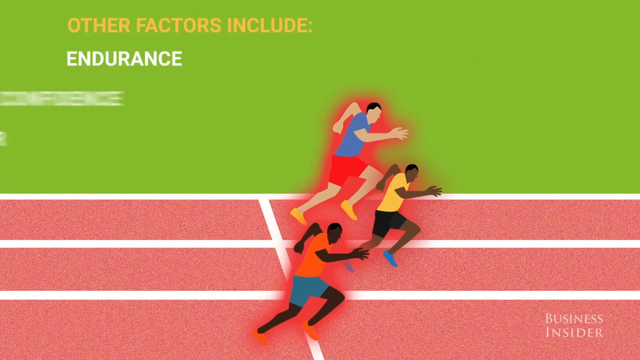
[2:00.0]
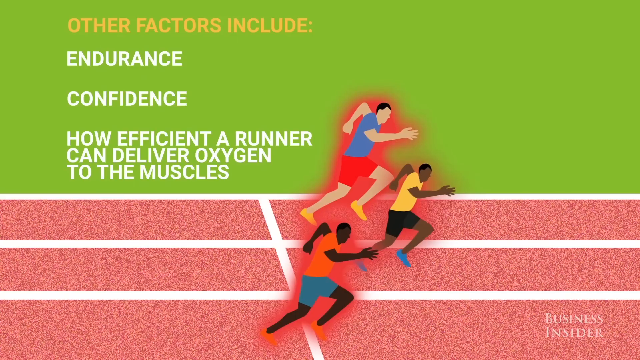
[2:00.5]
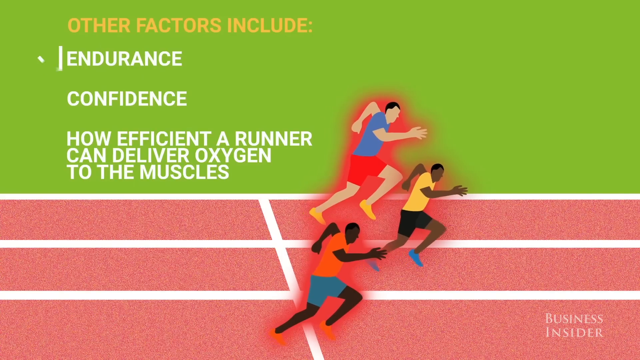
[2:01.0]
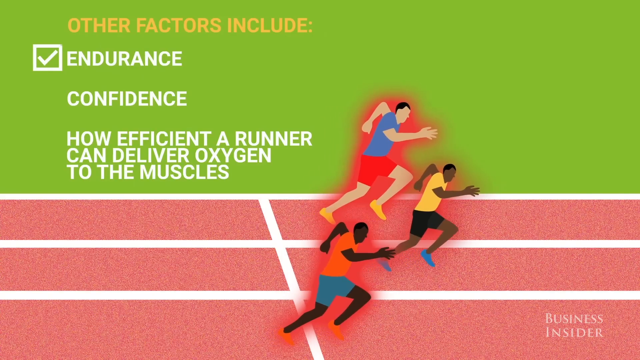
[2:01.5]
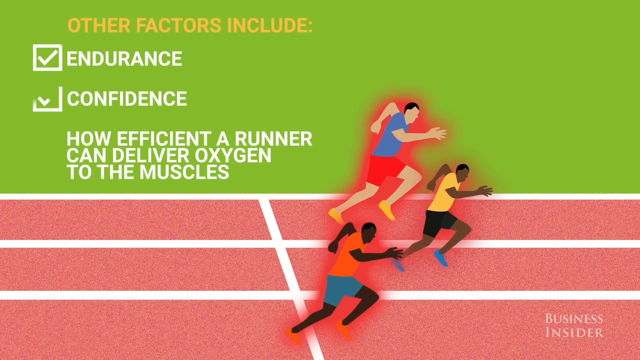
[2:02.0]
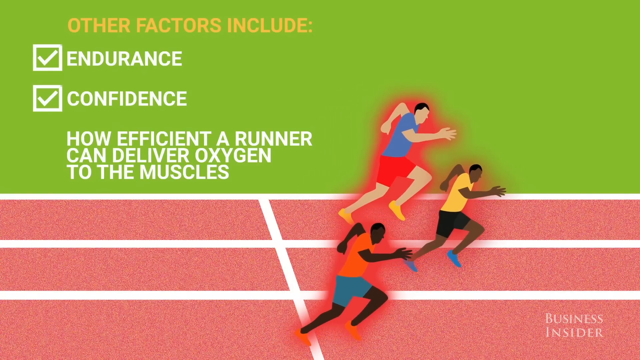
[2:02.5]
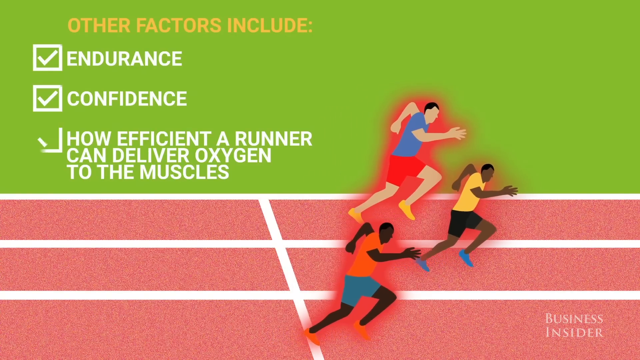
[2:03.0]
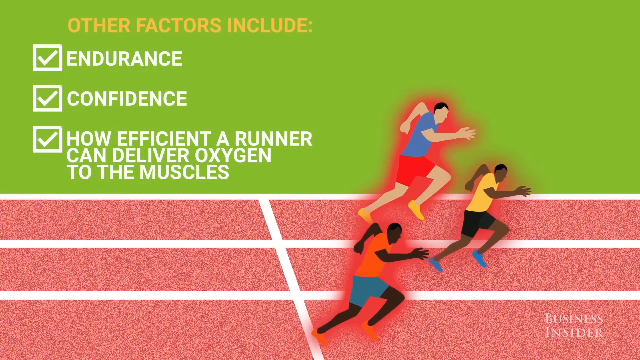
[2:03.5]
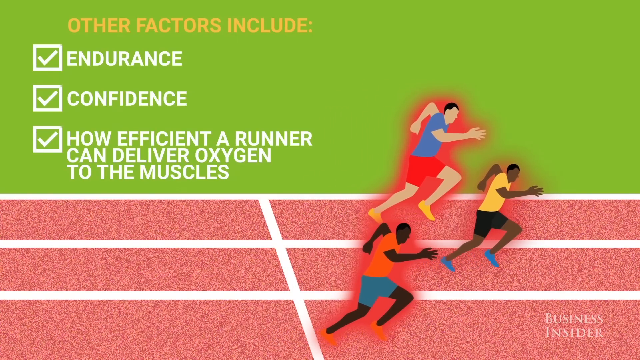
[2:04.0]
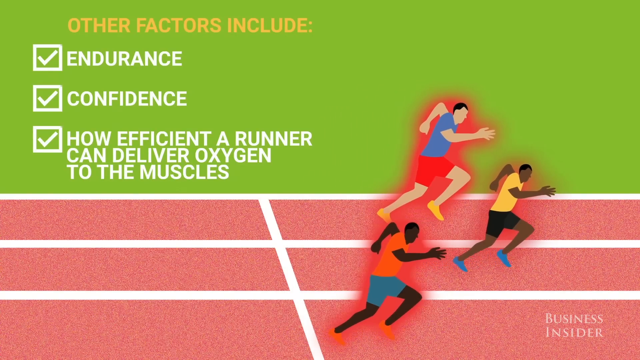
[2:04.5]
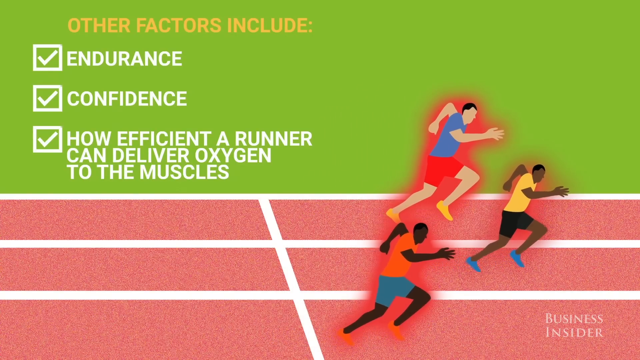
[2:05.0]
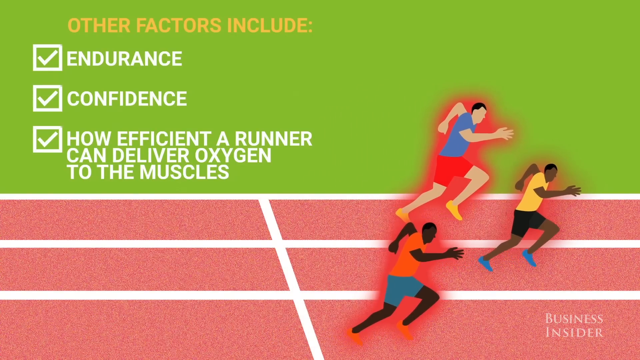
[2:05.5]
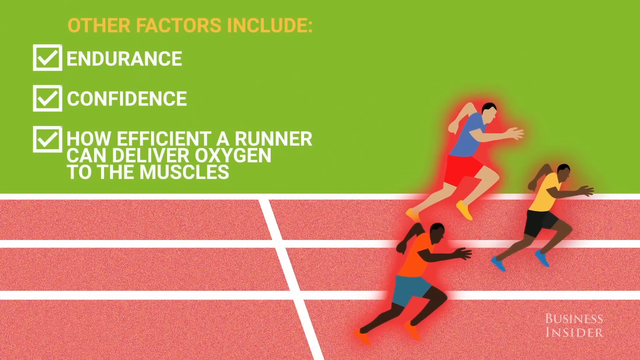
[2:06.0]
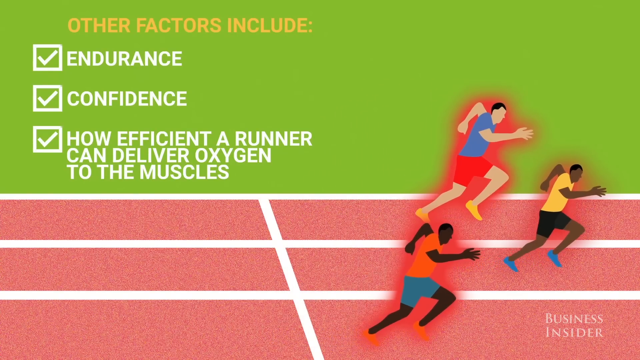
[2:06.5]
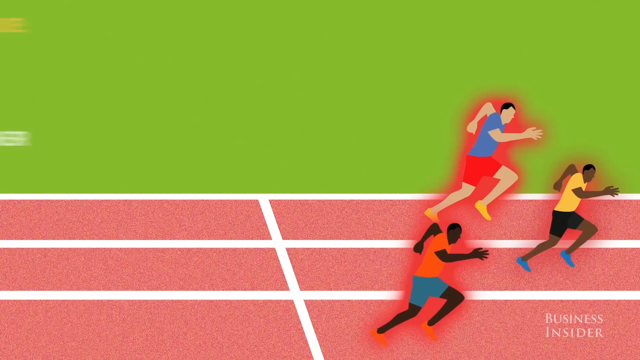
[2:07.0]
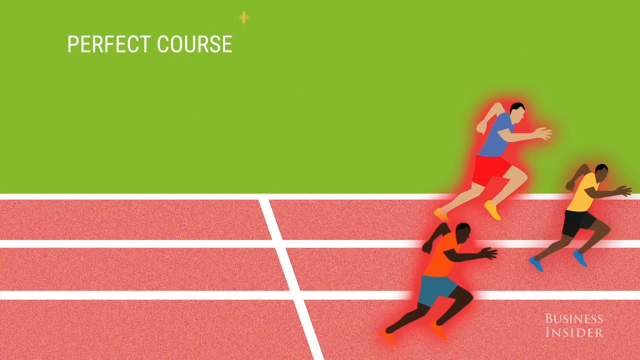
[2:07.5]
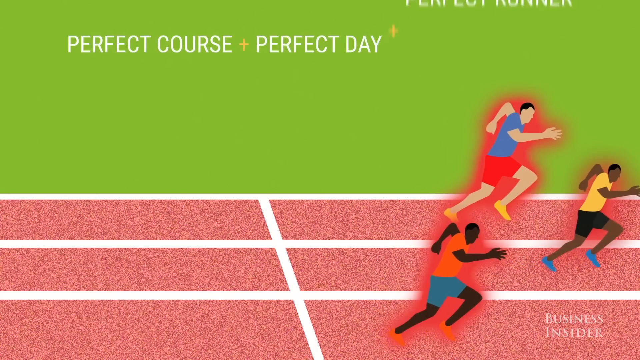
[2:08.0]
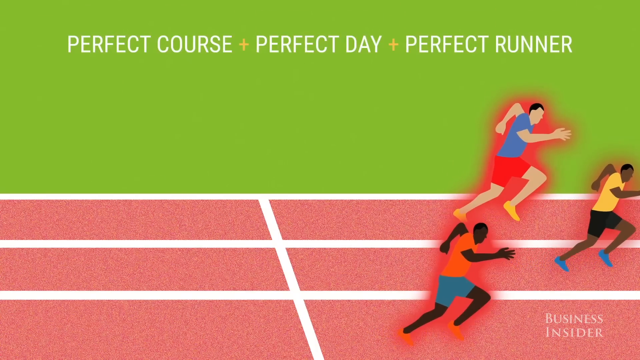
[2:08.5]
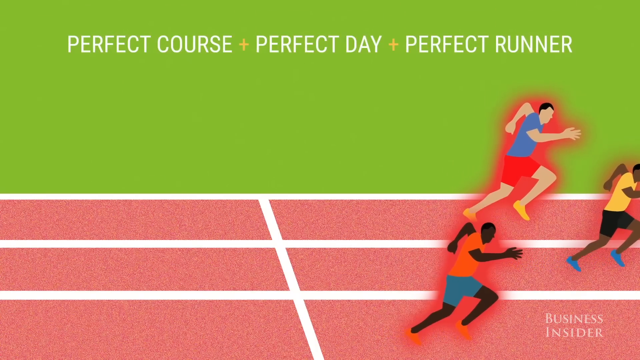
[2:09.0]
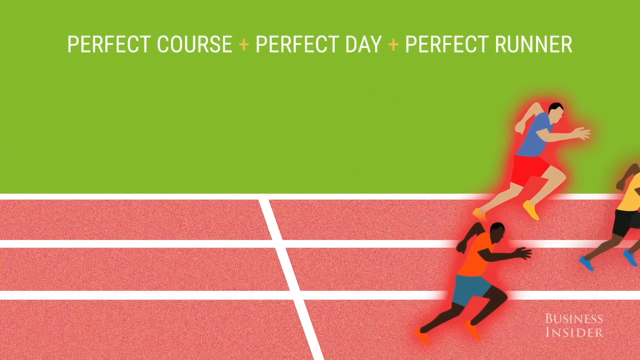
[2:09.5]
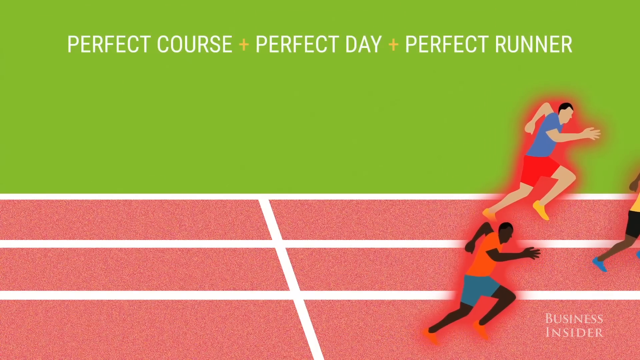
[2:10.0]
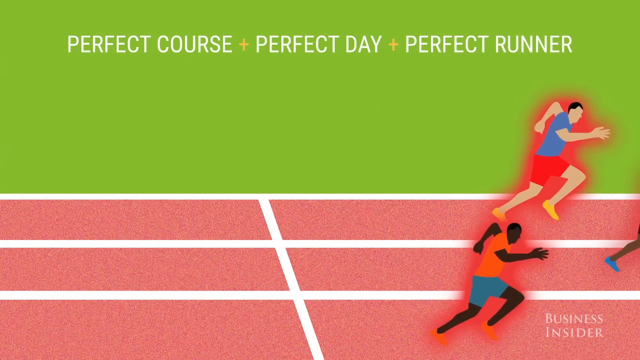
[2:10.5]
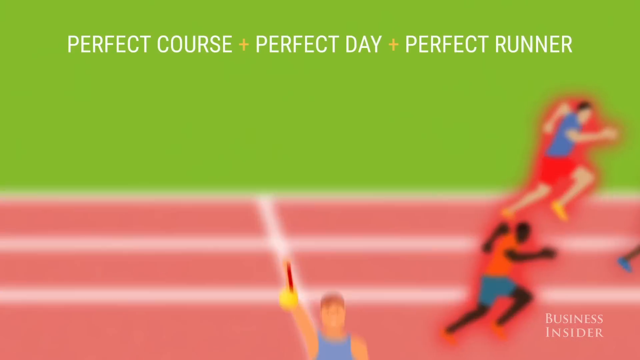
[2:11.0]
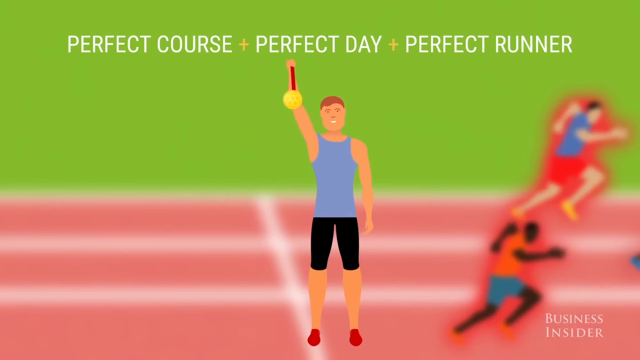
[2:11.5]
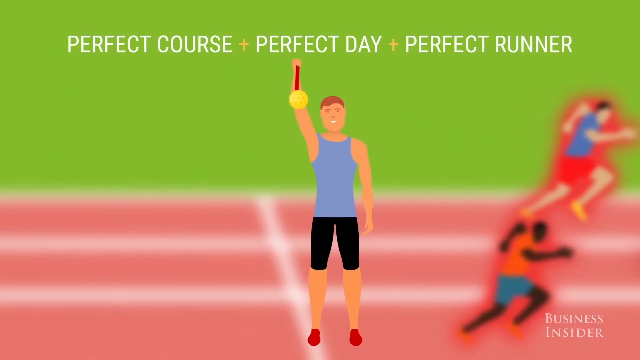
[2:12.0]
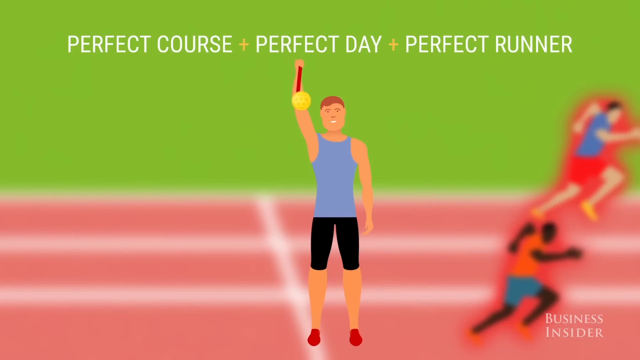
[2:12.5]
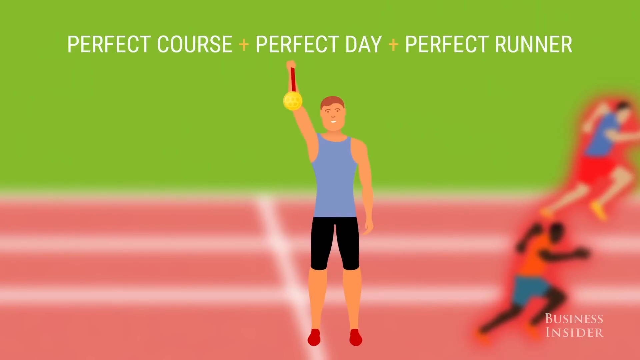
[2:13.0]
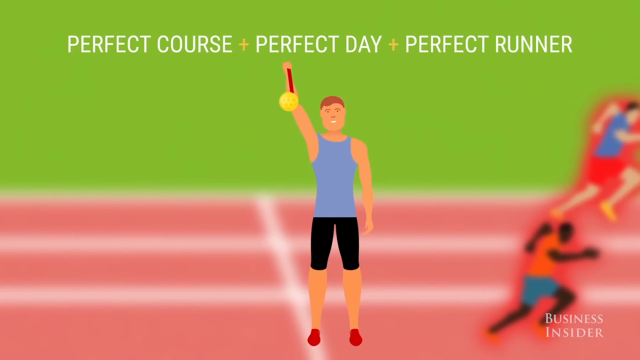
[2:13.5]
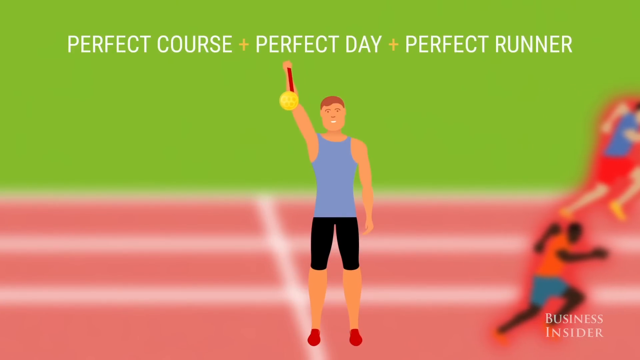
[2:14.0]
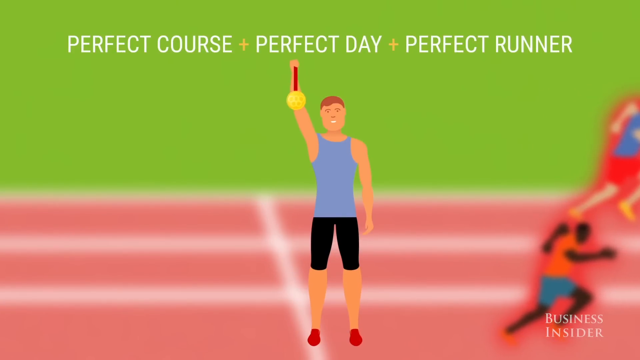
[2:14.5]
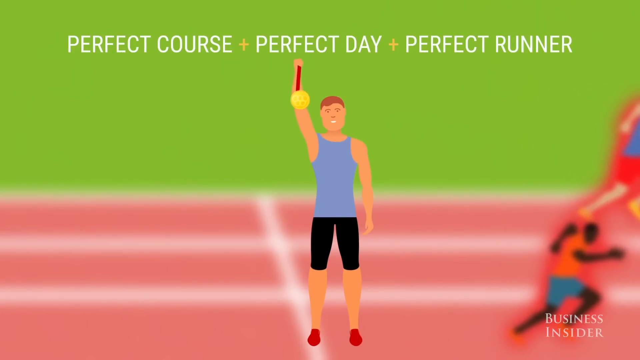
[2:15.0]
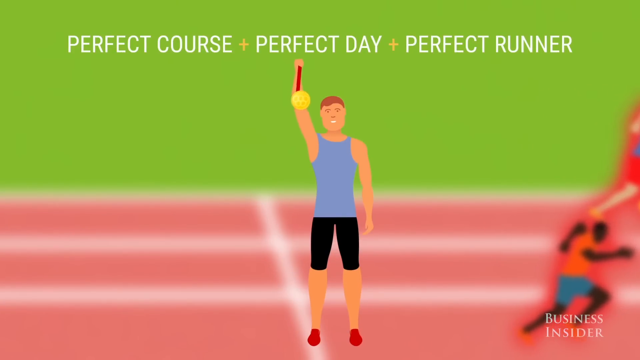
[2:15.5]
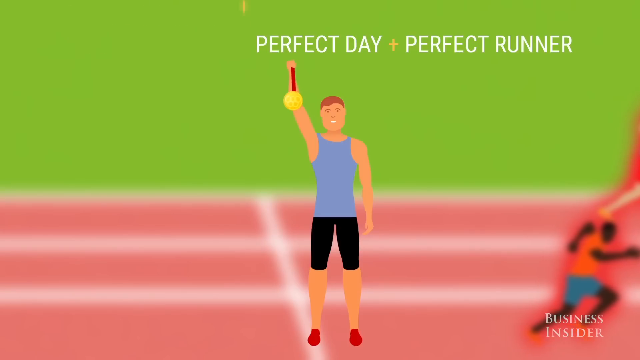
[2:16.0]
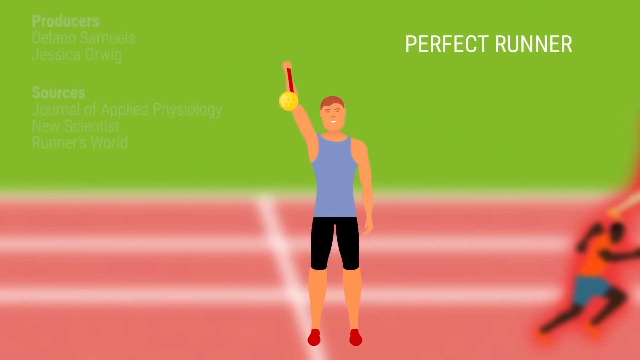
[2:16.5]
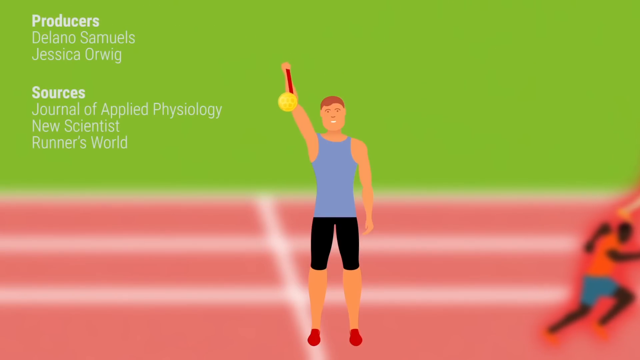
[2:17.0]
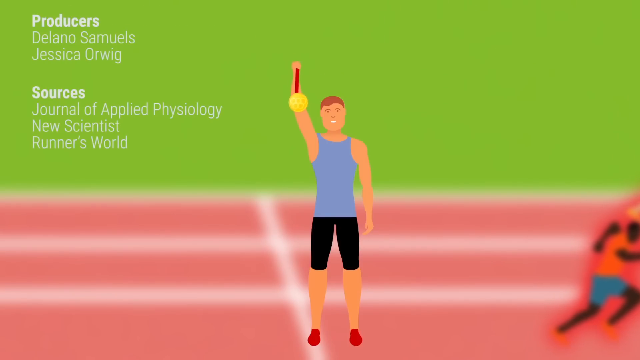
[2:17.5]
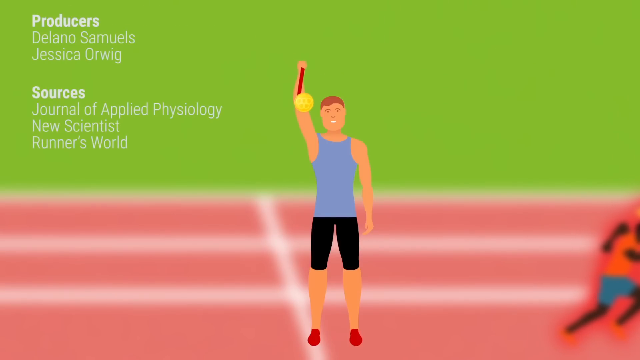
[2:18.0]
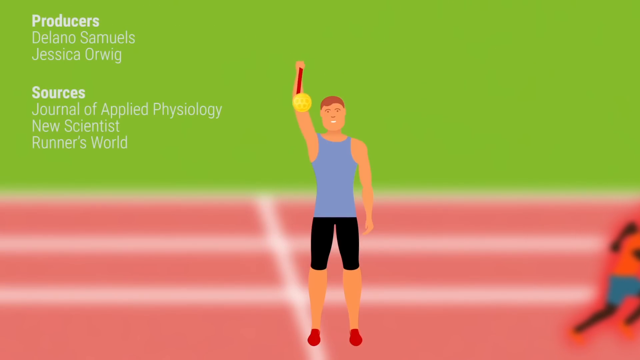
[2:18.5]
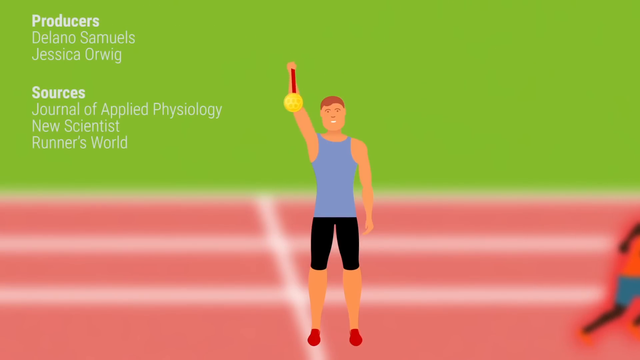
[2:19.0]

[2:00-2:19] Three small animated men run at the bottom of the screen while text reads "other factors include endurance, confidence, how efficient a runner can deliver oxygen to the muscles," with a checkmark appearing for each of the three. The men keep running. Text reads "perfect course plus perfect day plus perfect runner," and a man holding a gold medal pops onto the screen. The video ends with credits listing the producers and sources.